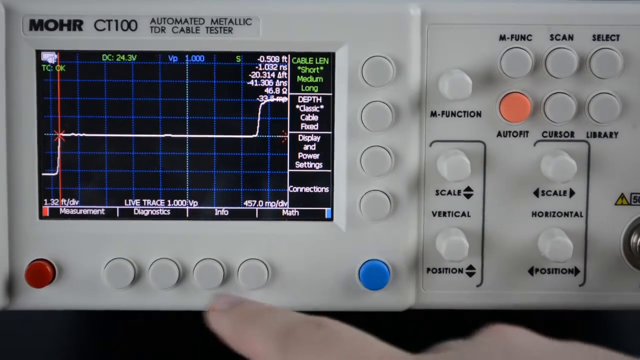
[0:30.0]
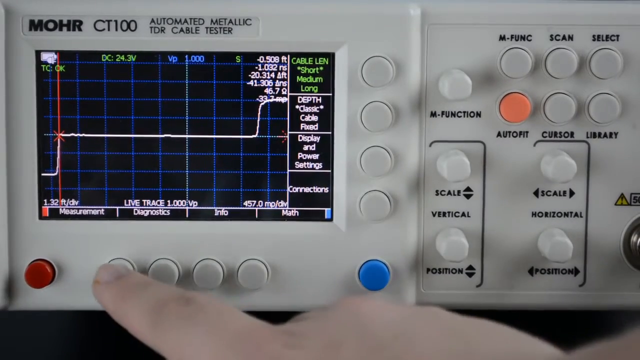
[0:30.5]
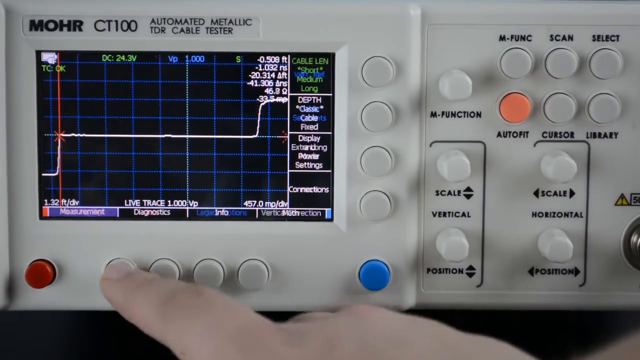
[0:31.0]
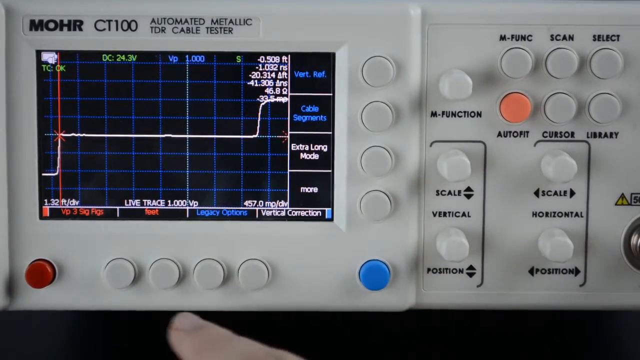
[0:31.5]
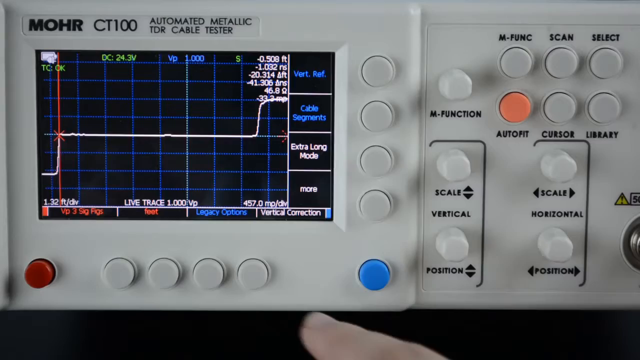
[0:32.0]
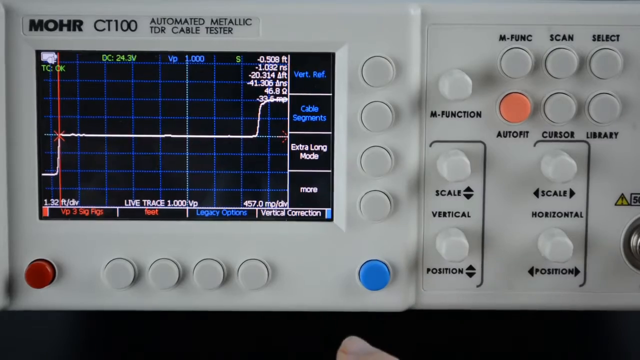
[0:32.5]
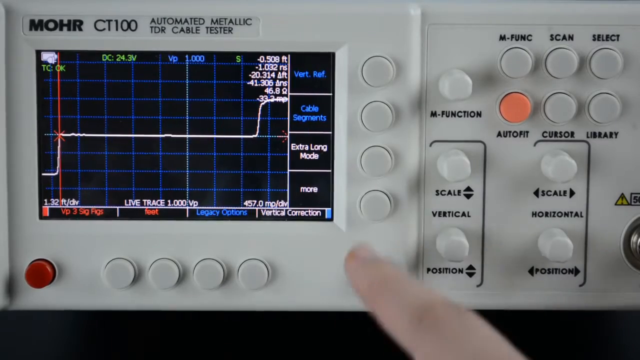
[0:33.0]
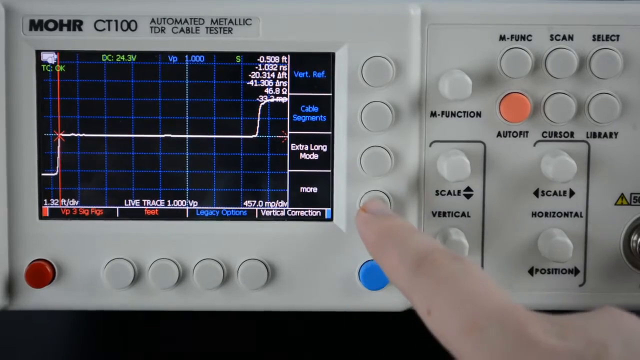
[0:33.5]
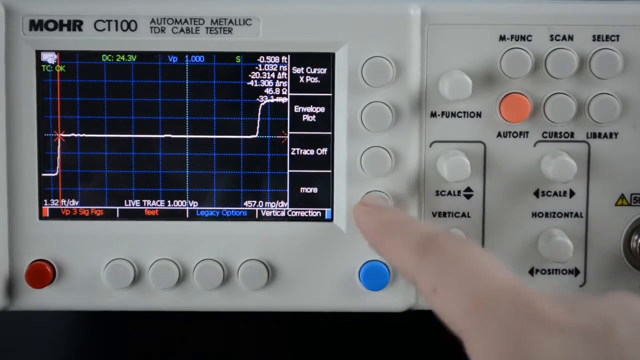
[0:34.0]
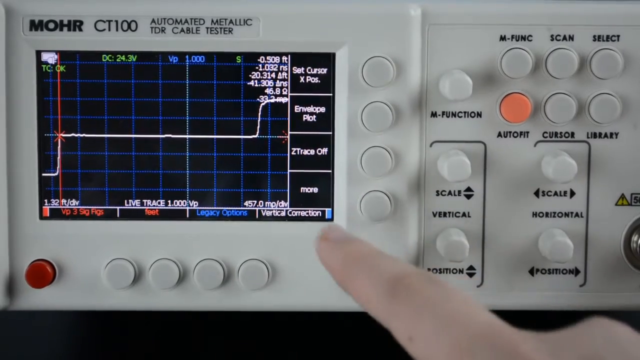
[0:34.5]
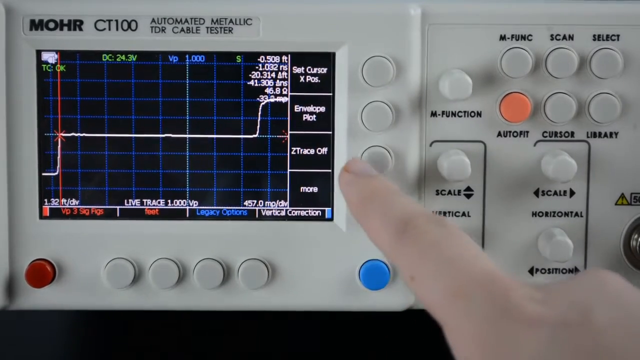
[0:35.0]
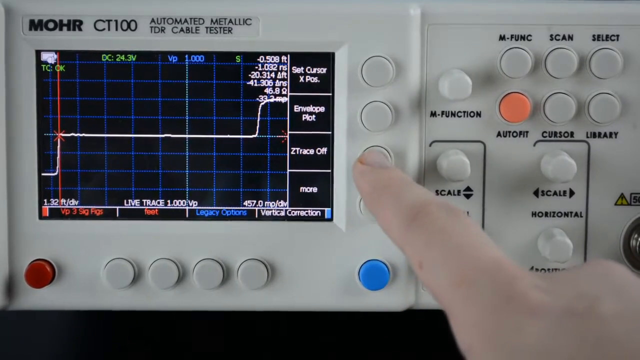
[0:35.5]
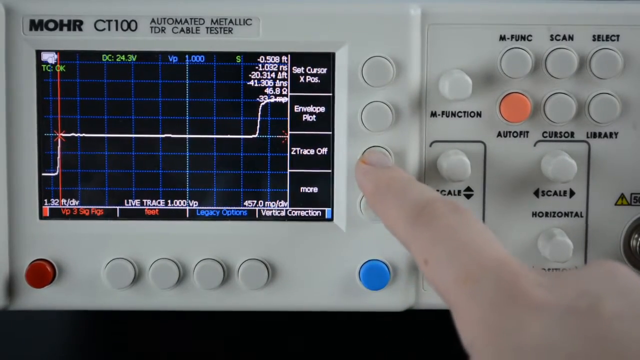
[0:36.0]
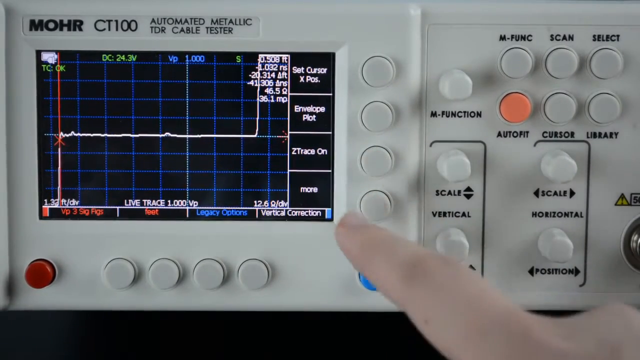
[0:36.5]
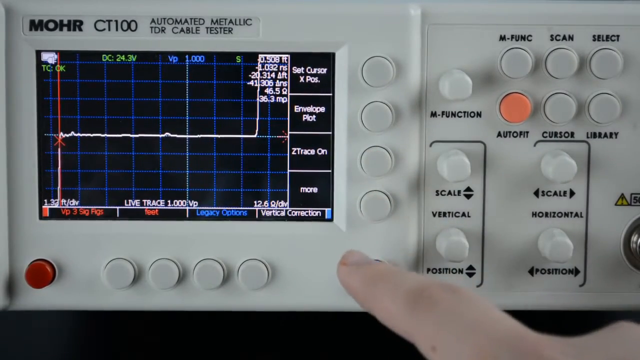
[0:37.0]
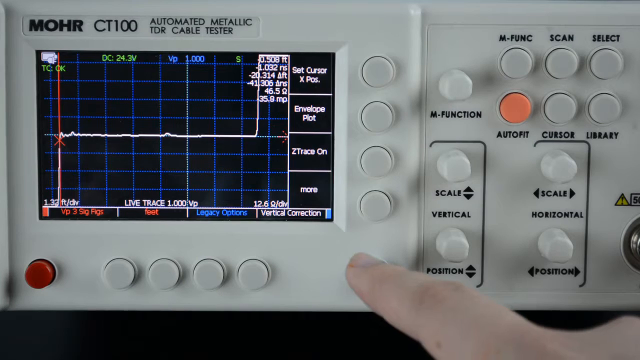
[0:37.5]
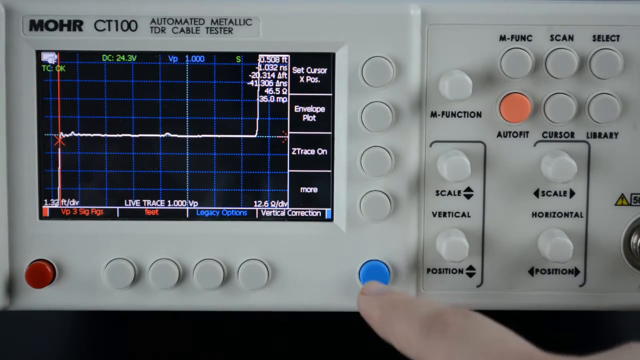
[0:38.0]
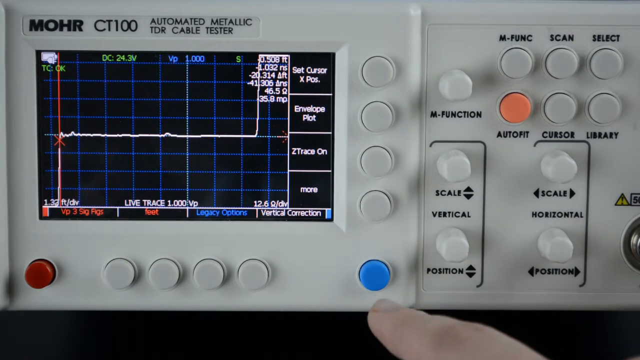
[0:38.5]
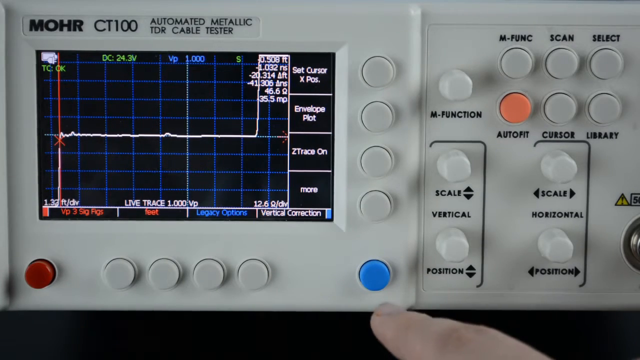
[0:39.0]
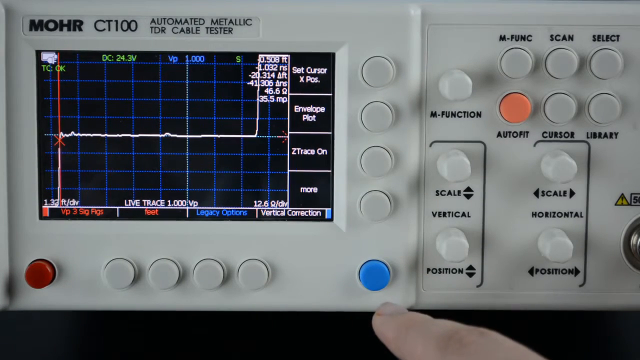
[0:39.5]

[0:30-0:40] The zoomed-in view of the device stays static. The device is some kind of cable tester with an LCD screen on its left side. Someone pushes the second button along below the LCD screen, which changes the LCD display. They then move their finger upwards toward the right side of the LCD screen and push the fourth button down, then lift their finger and push the third button down. As they do this, the screen changes options on a menu on its right side.